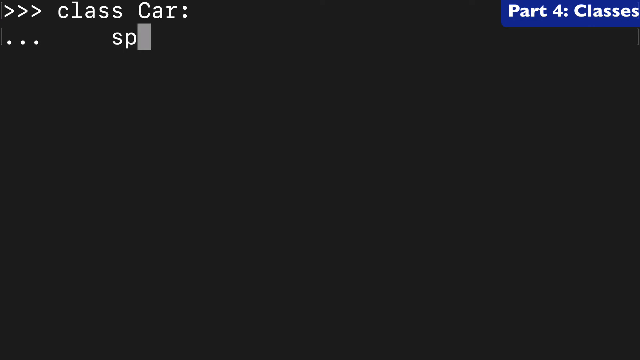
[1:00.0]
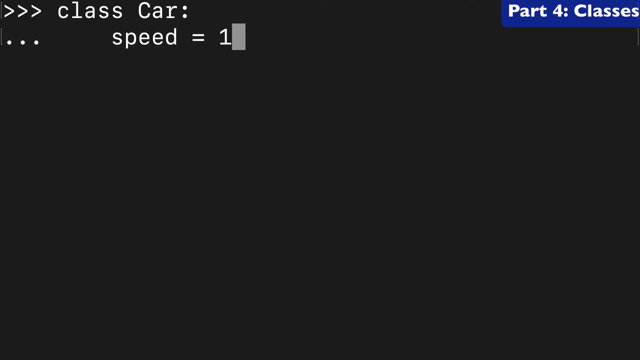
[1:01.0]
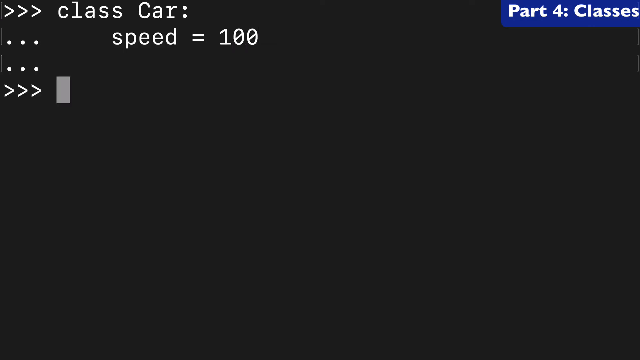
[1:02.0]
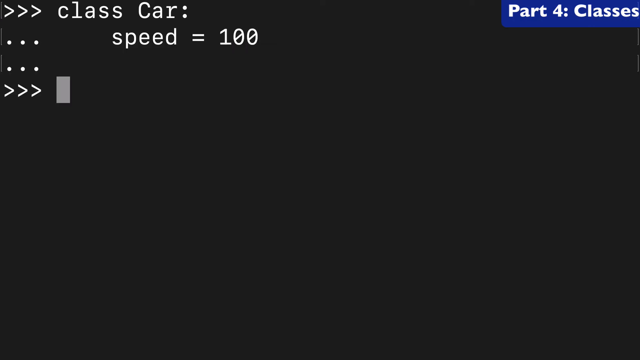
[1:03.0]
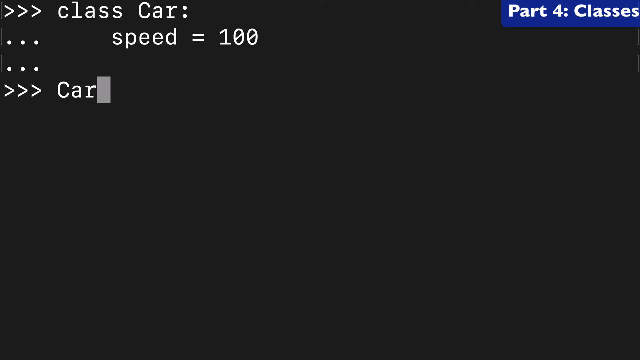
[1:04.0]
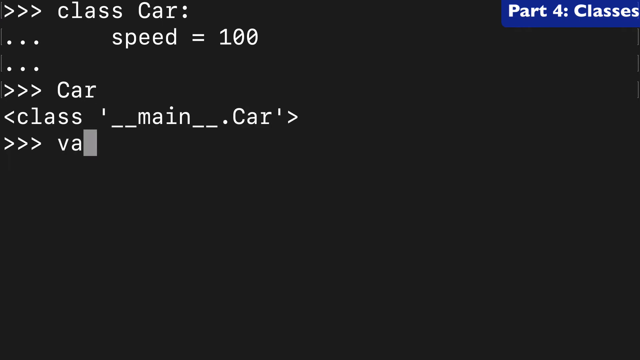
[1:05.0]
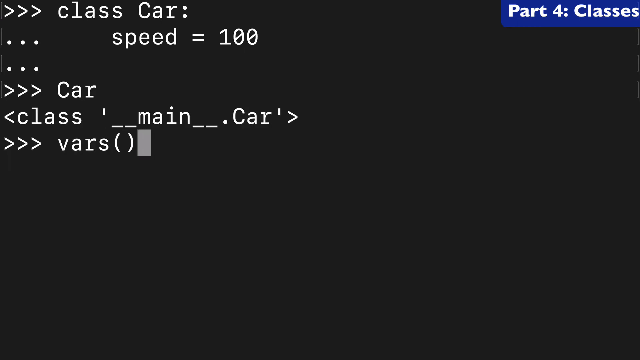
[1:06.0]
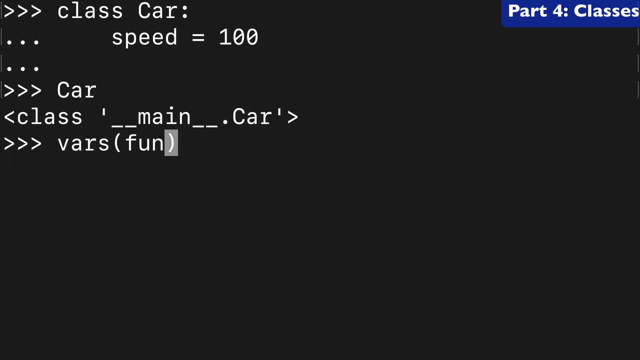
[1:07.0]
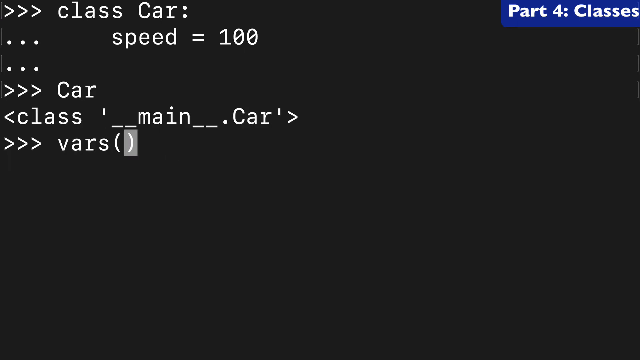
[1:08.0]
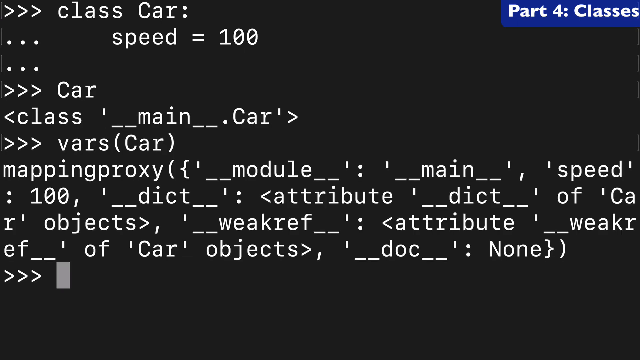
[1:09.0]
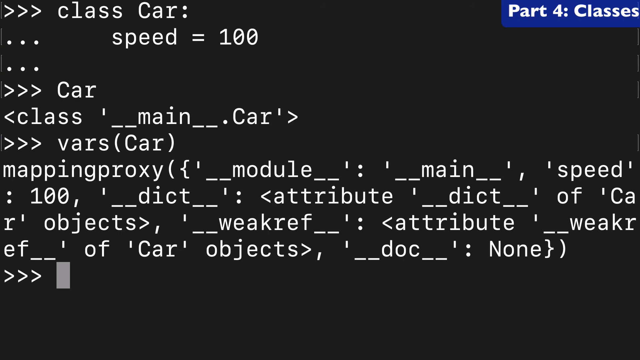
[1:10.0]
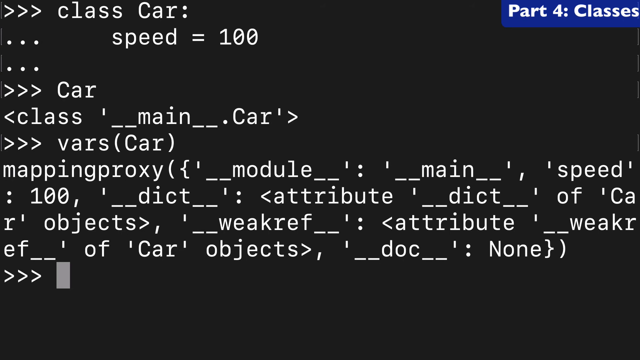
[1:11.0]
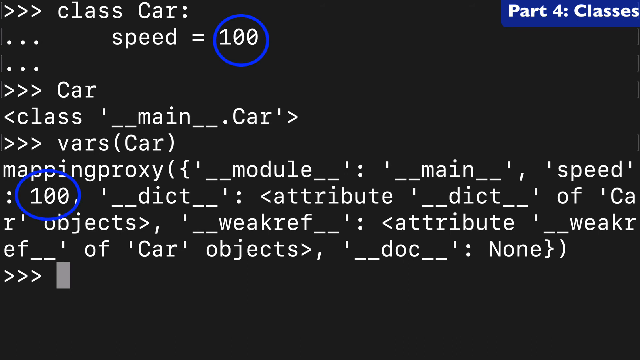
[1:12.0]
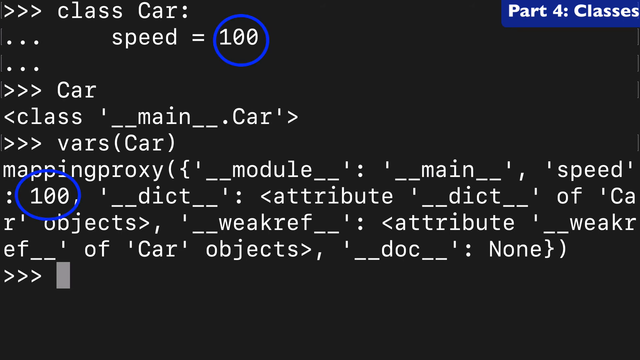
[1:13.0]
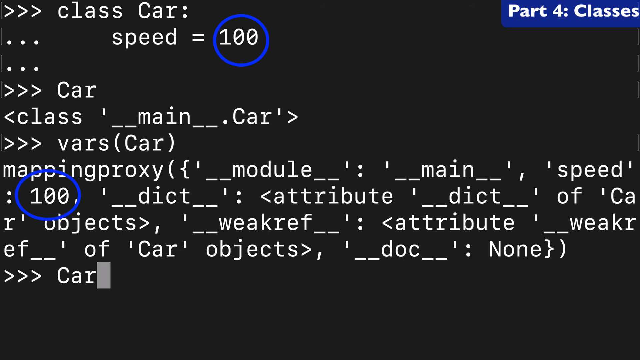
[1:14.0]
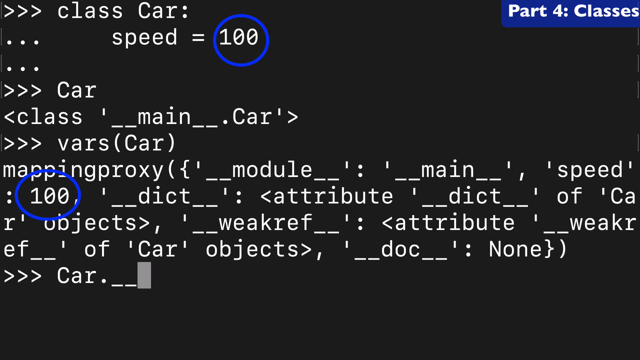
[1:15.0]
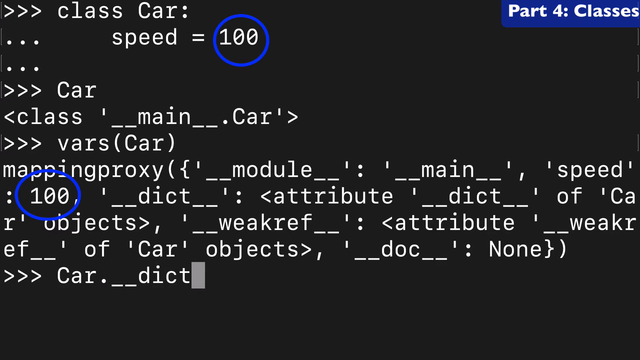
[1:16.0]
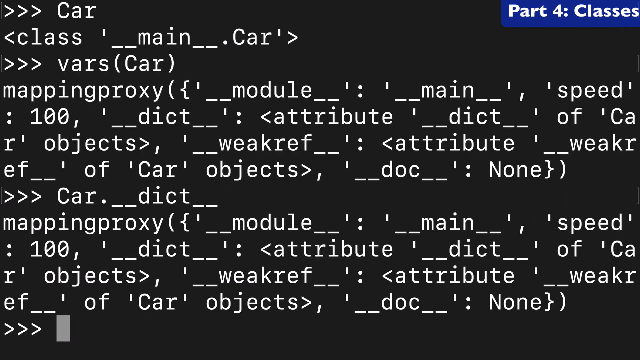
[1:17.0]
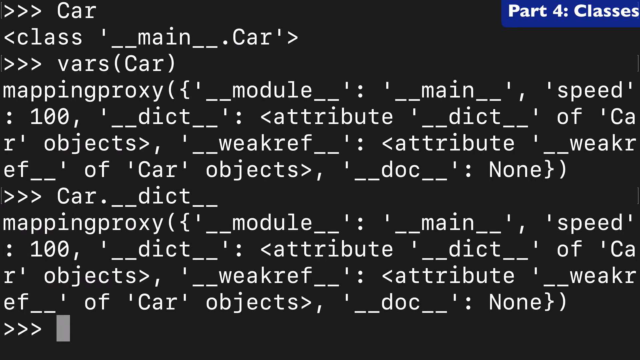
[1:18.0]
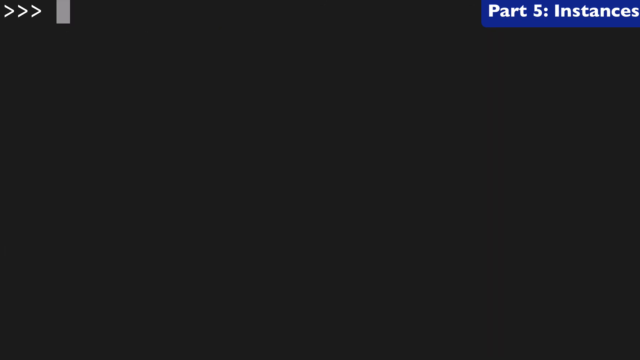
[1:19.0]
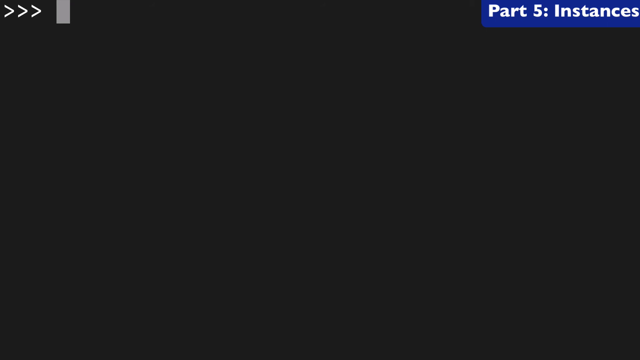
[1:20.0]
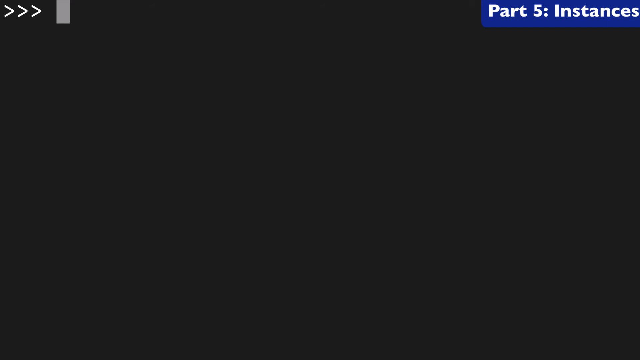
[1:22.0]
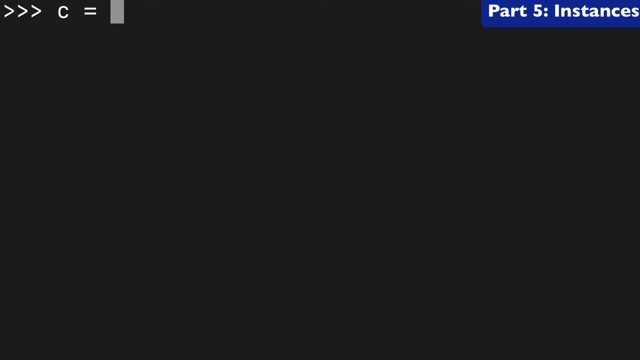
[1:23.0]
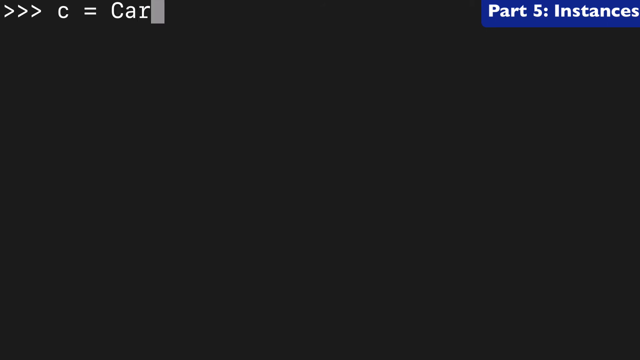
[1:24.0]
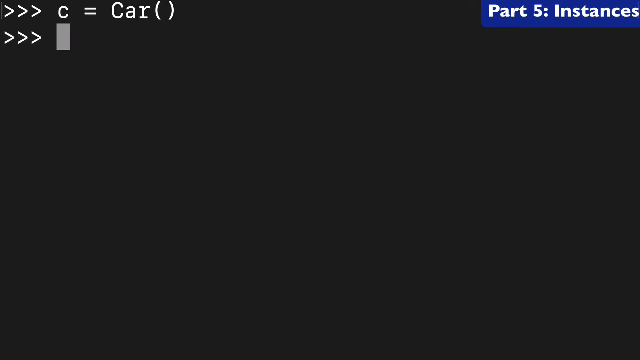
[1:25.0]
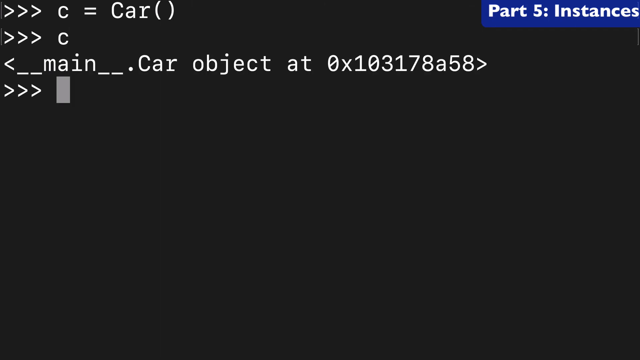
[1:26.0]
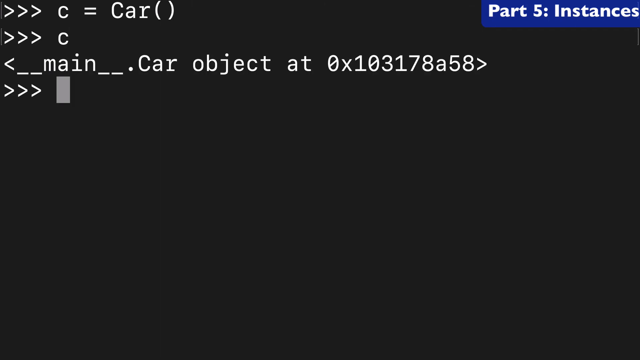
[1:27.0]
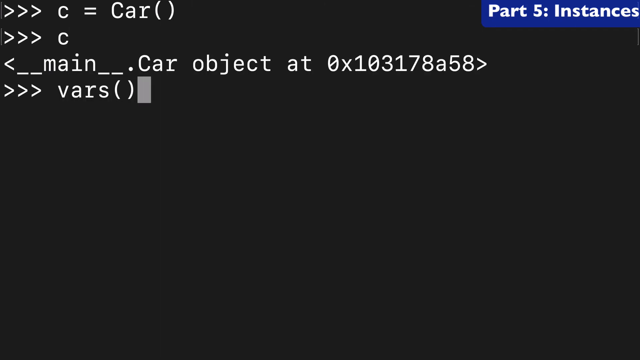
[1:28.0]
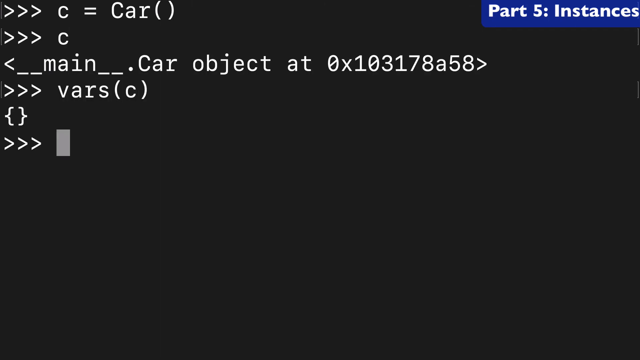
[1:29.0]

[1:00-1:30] In the upper right corner, text says "part 4" and "Classes", with "Classes" capitalized. The person types after three greater-than symbols: "class Car" with "Car" capitalized, followed by dots, then lines with "..." and "speed = 100". The output shows "Car", "__main__", and words such as "mappingproxy", "module", "main", "speed", the number 100, "dict attribute", "dict of Car objects", "weakref attribute", "weakref of Car objects", "doc" and "None". The person appears to circle the two 100s. The screen goes blank again, and the upper right corner now says "Part 5" and "Instances" in white.